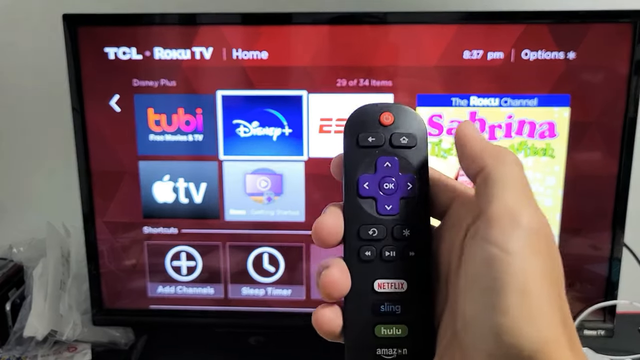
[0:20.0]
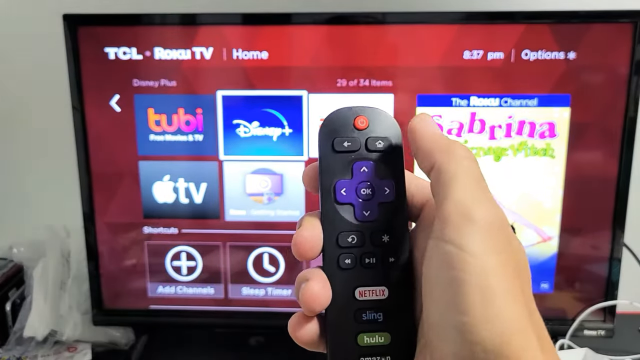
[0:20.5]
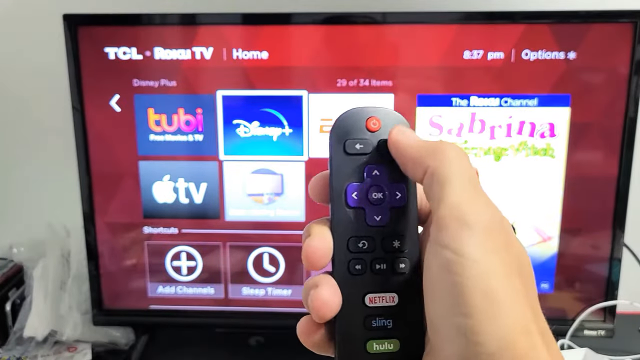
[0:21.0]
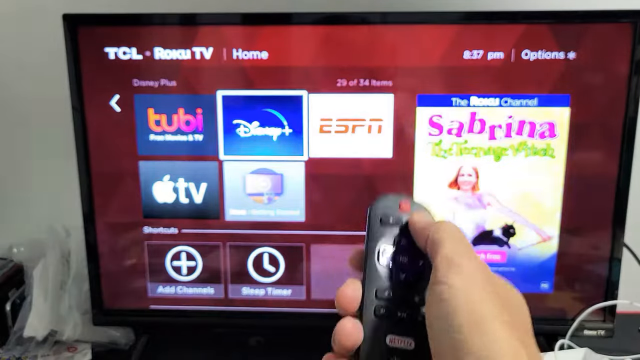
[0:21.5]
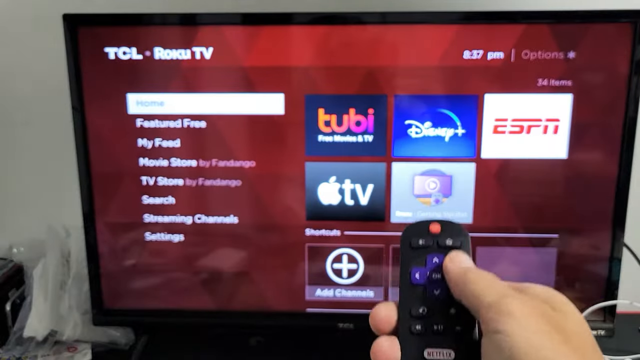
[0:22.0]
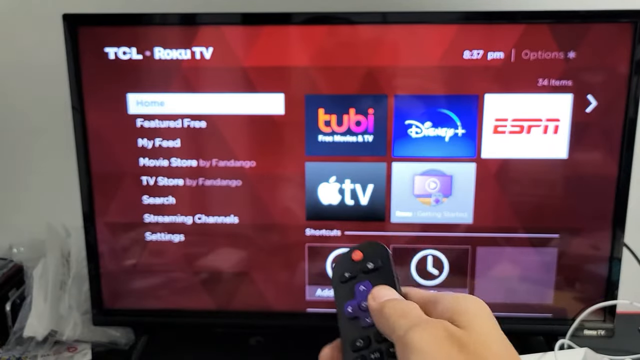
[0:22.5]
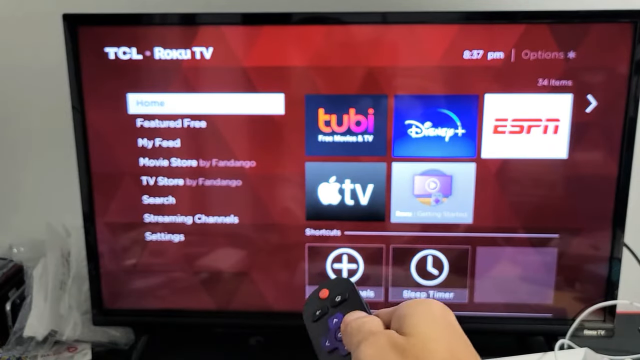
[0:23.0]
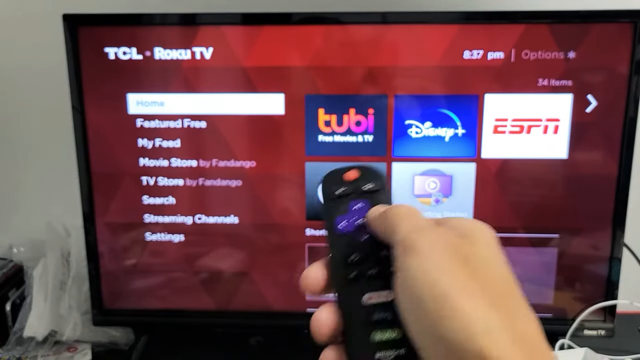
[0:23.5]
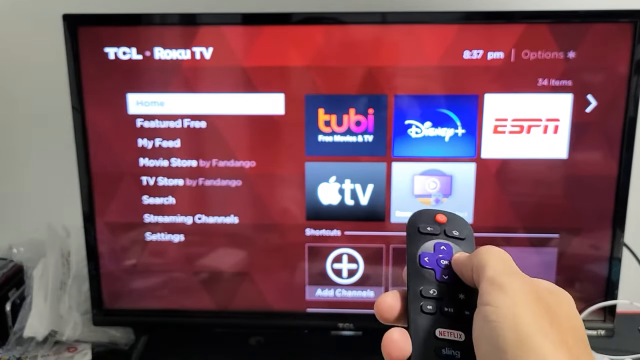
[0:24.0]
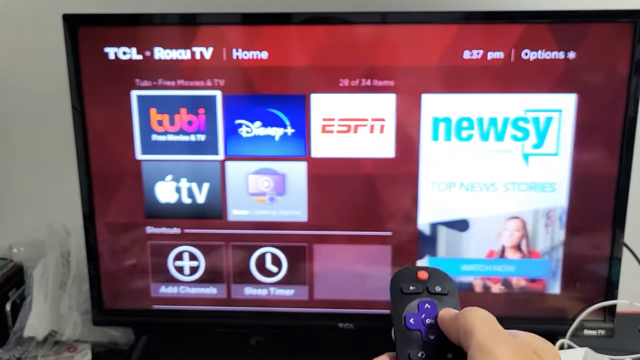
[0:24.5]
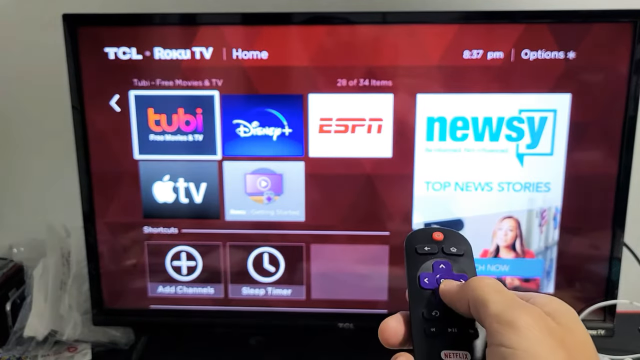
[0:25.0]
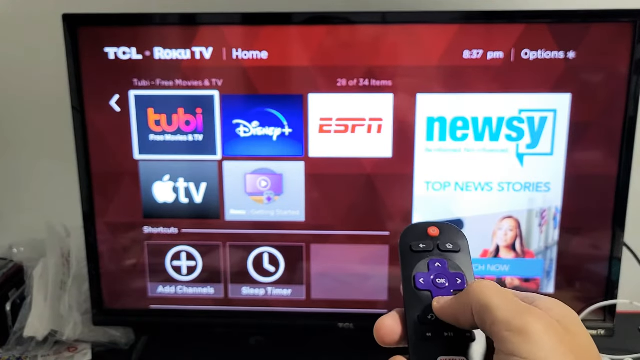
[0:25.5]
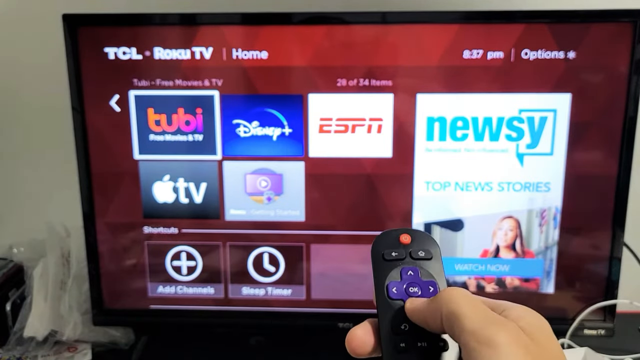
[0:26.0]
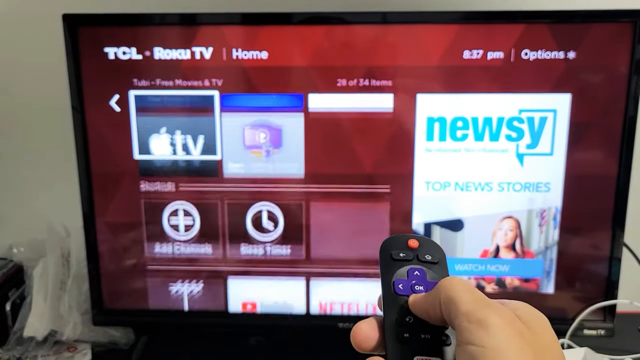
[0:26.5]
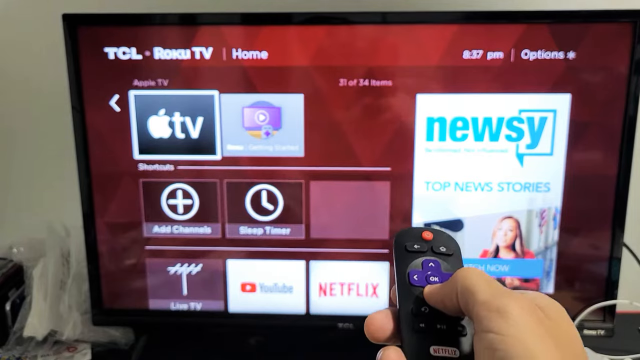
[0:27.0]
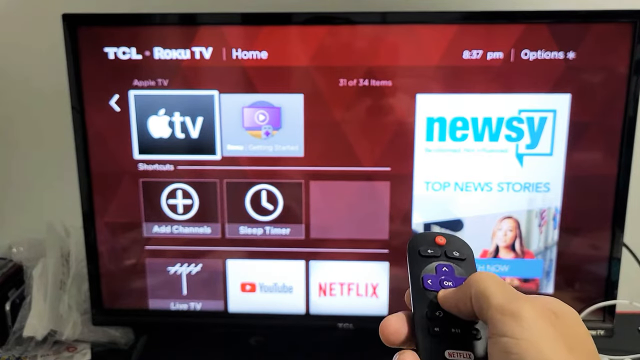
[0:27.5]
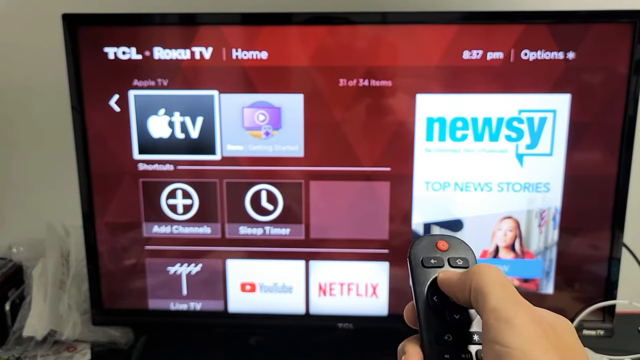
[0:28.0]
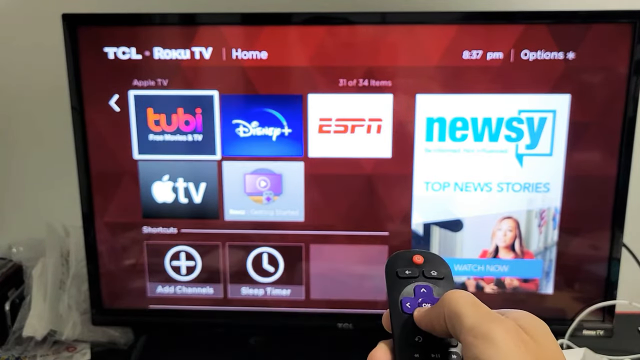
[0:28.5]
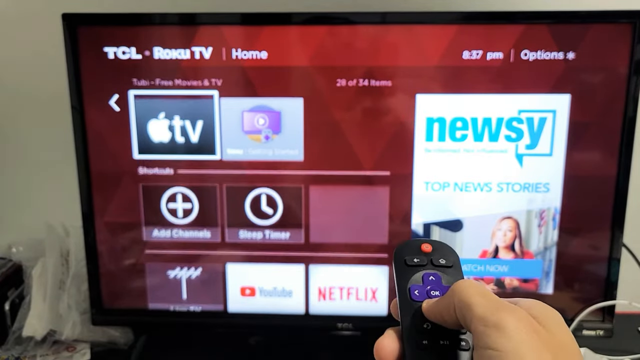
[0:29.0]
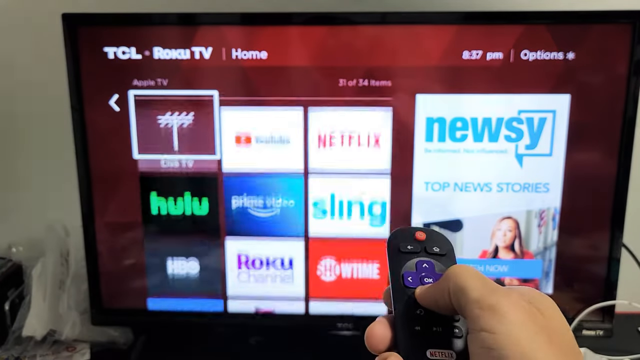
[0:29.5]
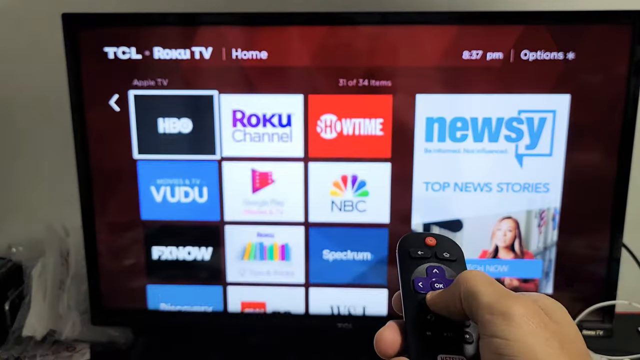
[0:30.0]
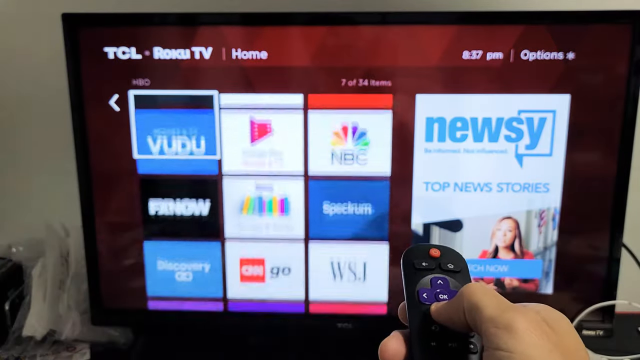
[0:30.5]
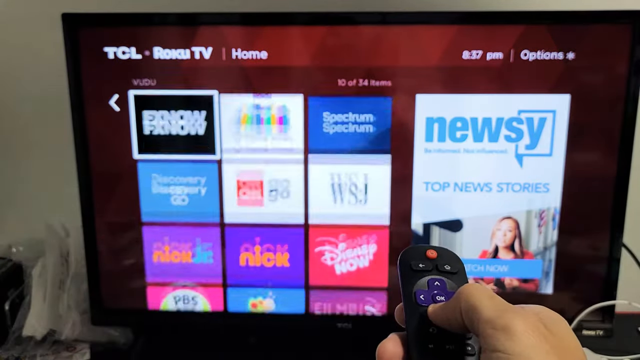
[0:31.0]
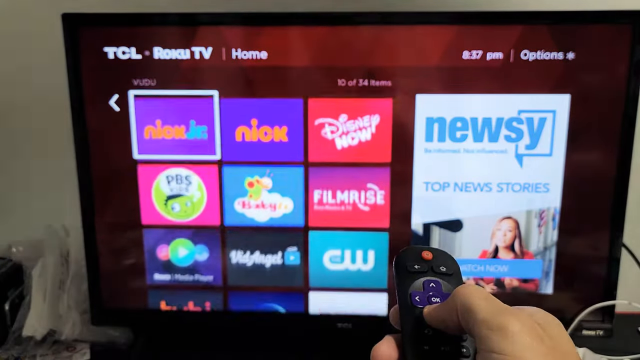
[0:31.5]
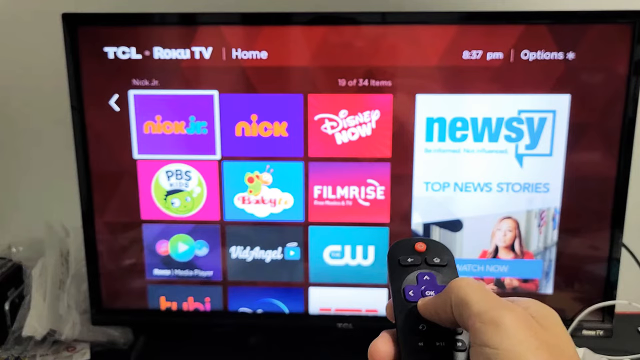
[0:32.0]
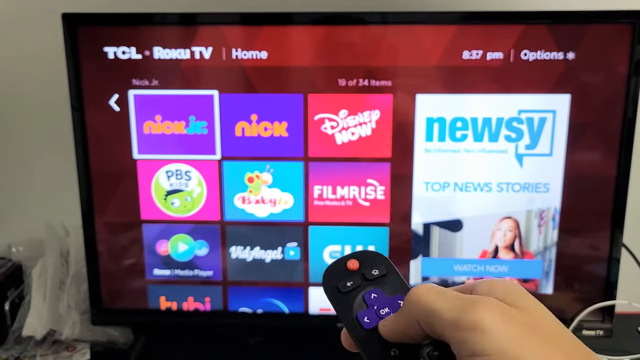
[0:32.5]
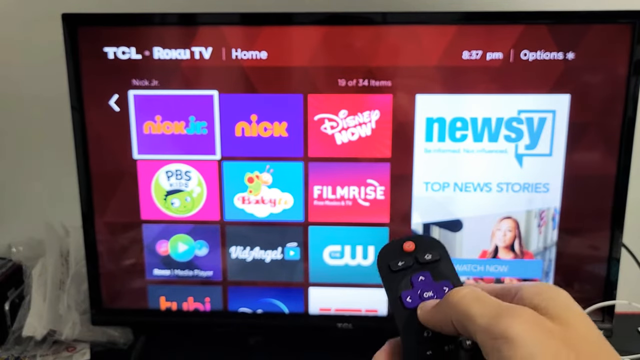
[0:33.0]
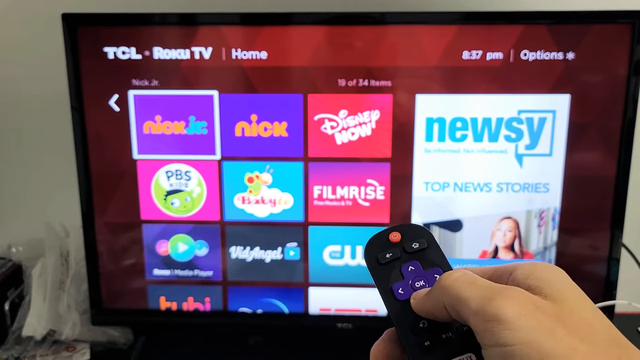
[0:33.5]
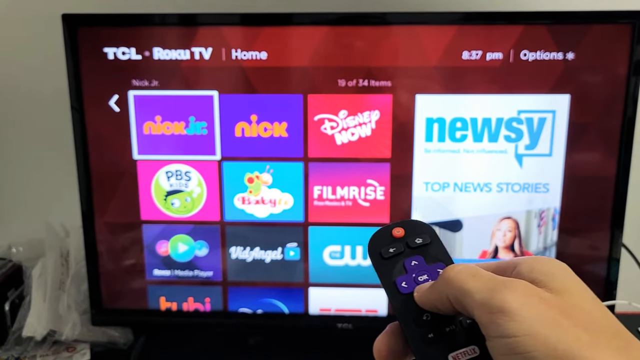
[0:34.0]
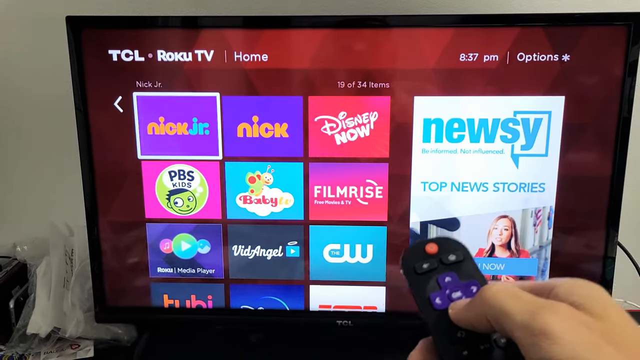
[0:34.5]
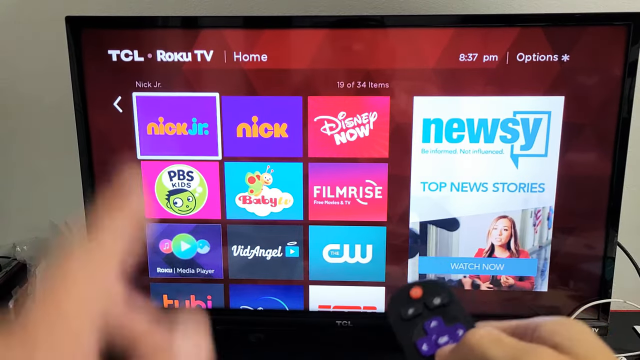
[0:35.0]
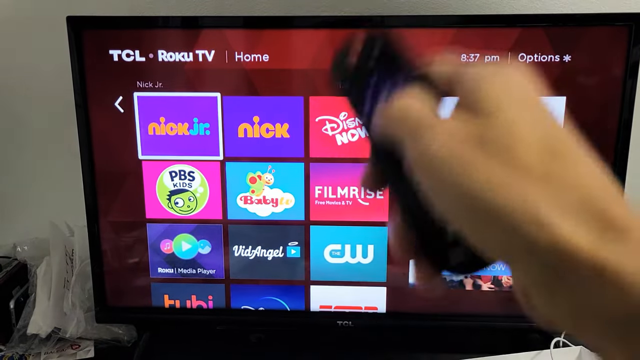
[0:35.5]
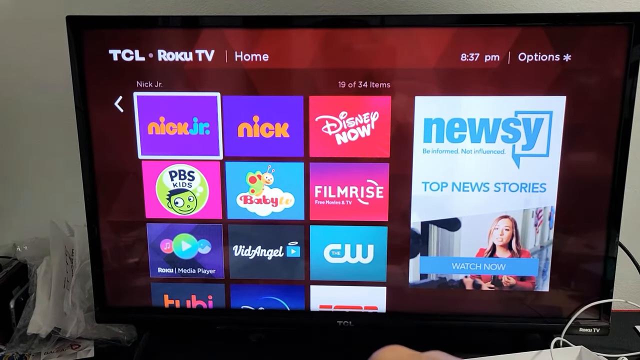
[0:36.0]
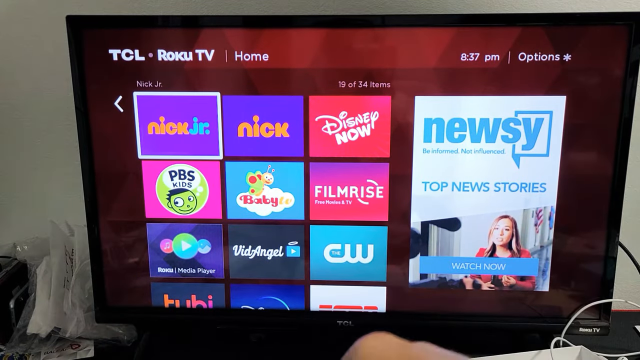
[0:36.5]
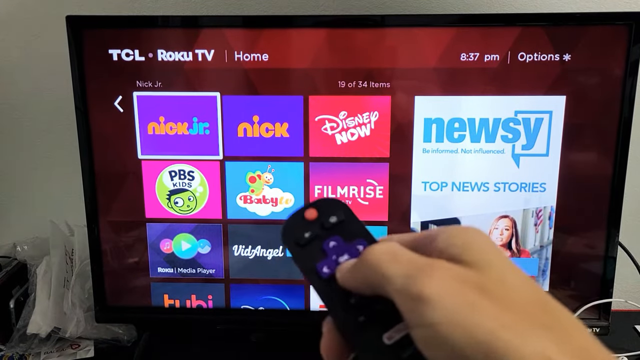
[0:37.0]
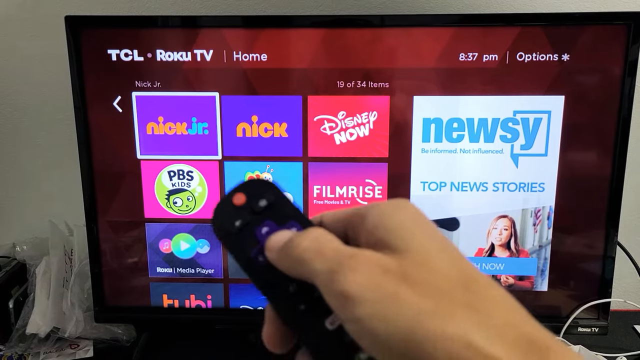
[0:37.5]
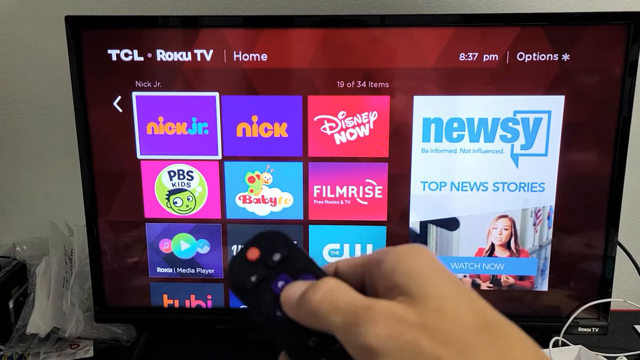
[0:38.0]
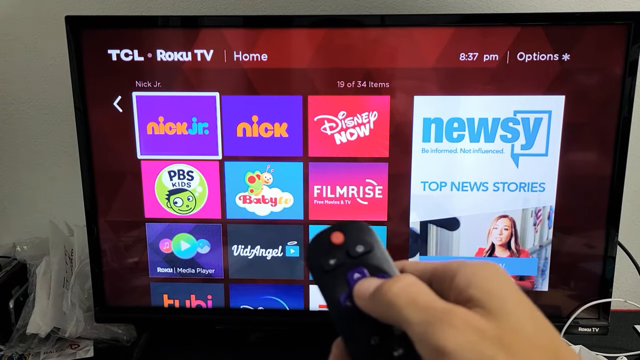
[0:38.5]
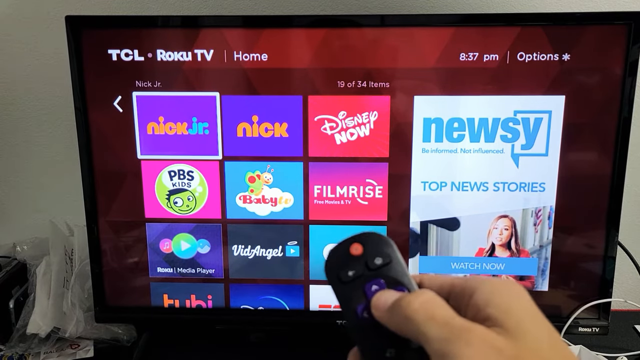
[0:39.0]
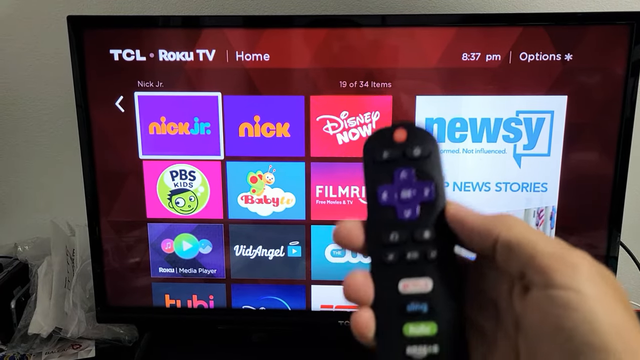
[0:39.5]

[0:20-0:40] The video appears to be a tutorial on how to set up a TV. At the very beginning, the person pushes the home button on the remote, which opens a set of free movies and TV at the top with shortcuts below. They press the down arrow, then the up arrow, and then keep going down through the list of different apps connected to the TV. The person has the remote in their hand and moves their hand in a way that seems to indicate things on the TV. Before pushing each button, they hold the remote up so the buttons can be clearly seen, then slowly push their finger on the button they want. The background around the TV is sort of messy.